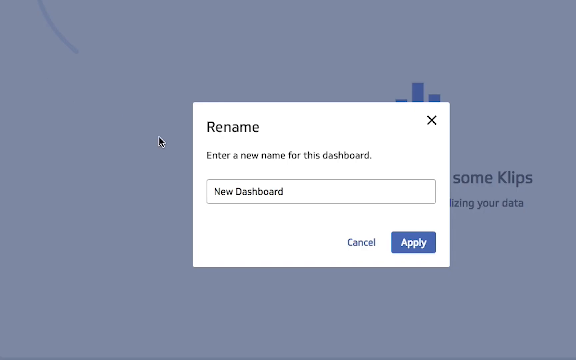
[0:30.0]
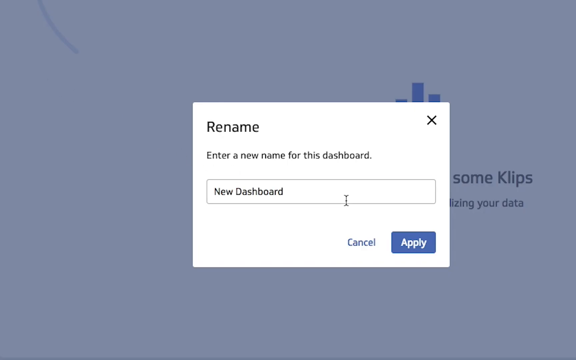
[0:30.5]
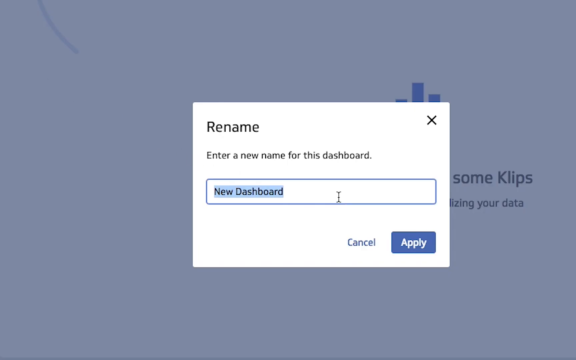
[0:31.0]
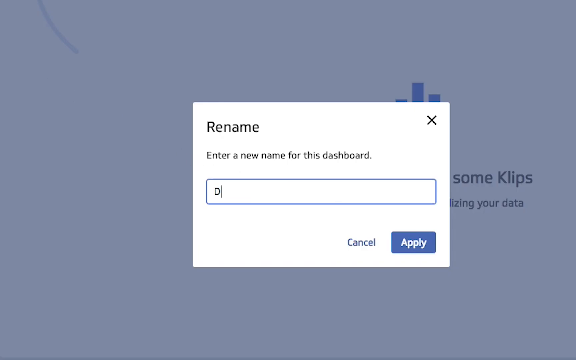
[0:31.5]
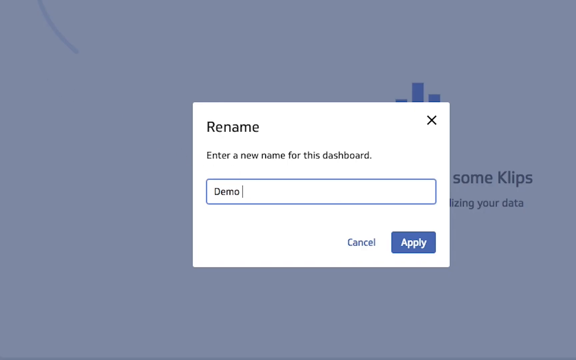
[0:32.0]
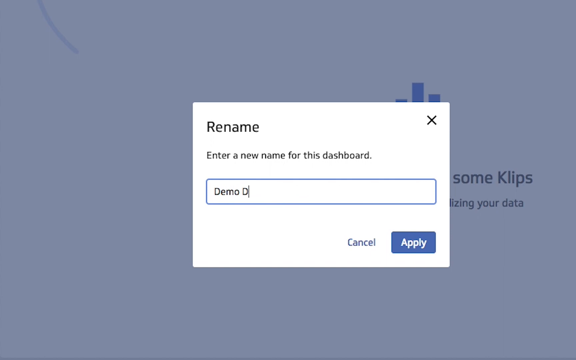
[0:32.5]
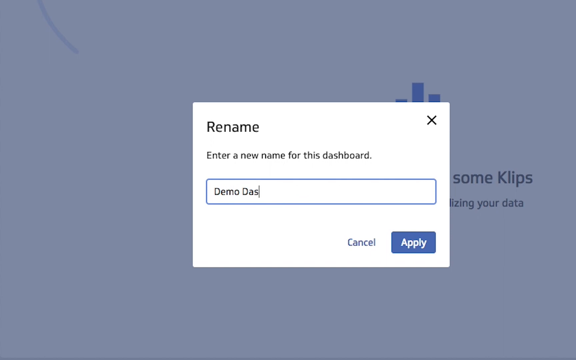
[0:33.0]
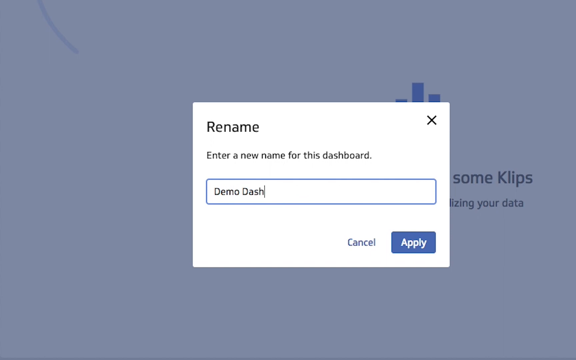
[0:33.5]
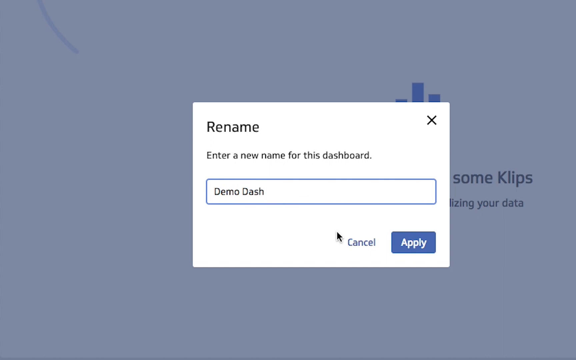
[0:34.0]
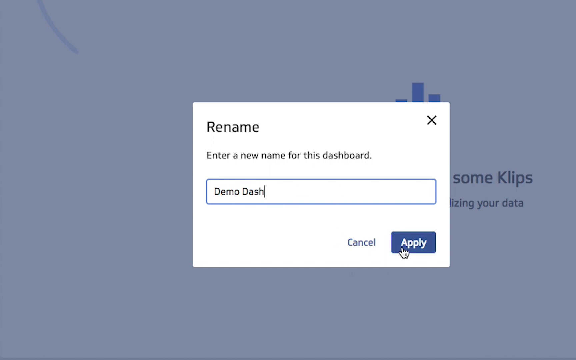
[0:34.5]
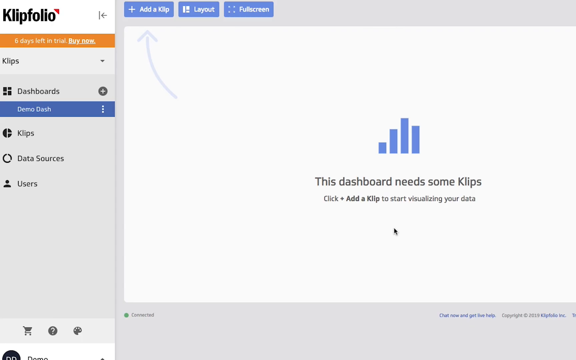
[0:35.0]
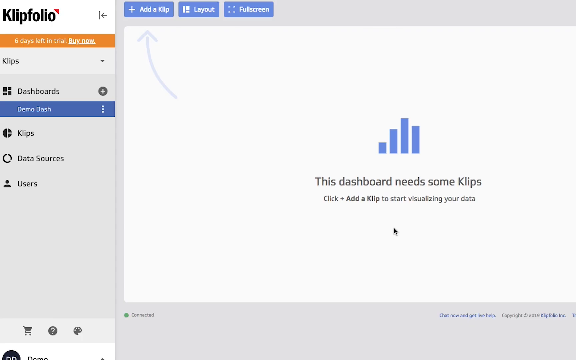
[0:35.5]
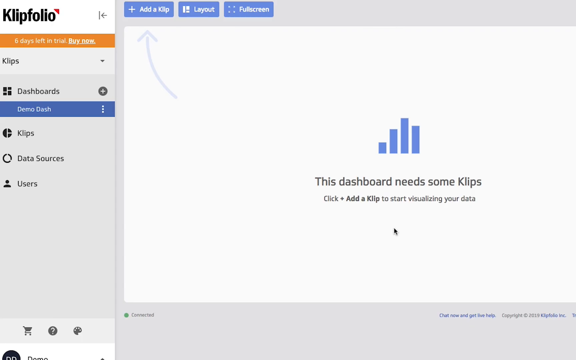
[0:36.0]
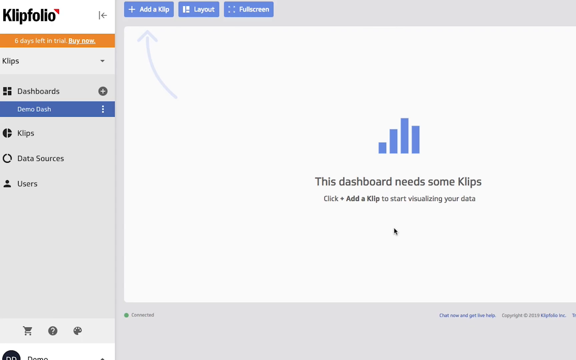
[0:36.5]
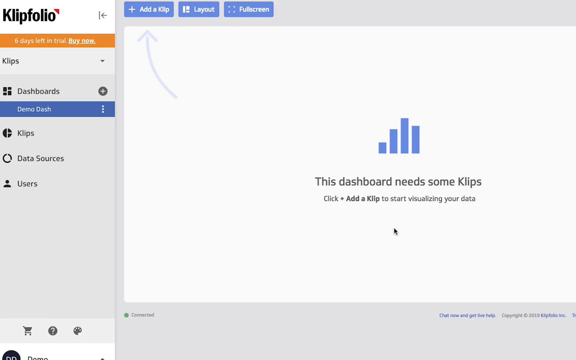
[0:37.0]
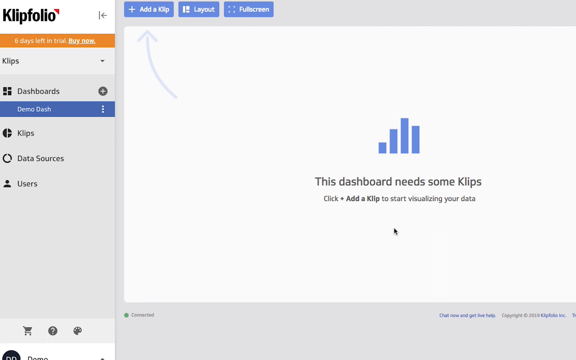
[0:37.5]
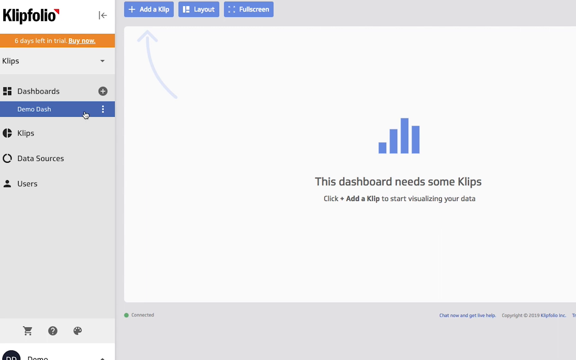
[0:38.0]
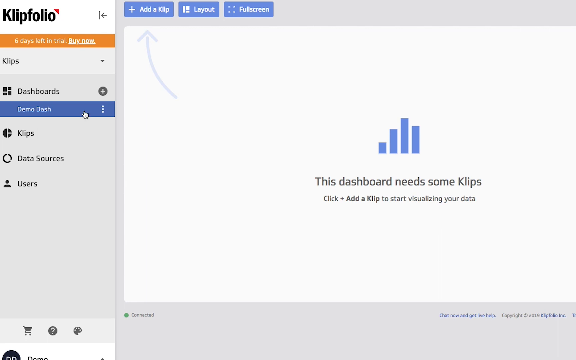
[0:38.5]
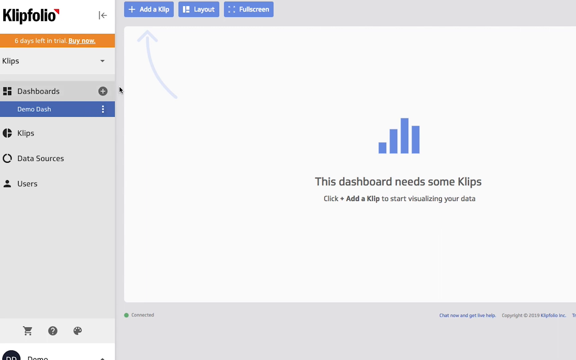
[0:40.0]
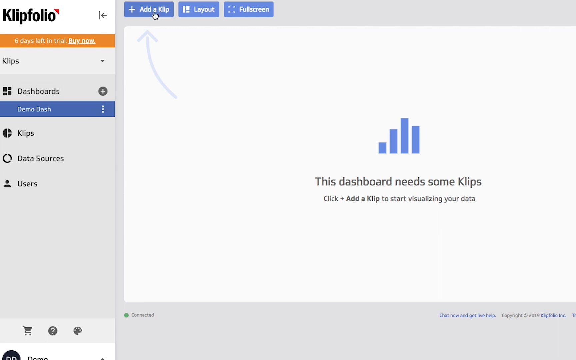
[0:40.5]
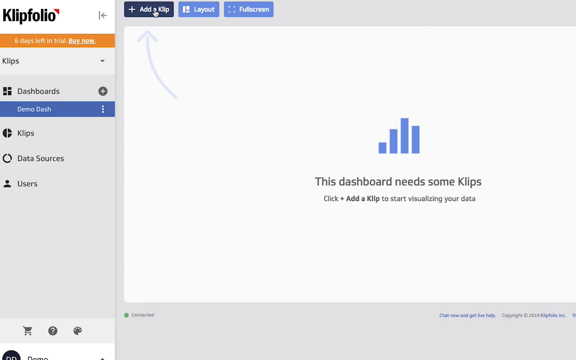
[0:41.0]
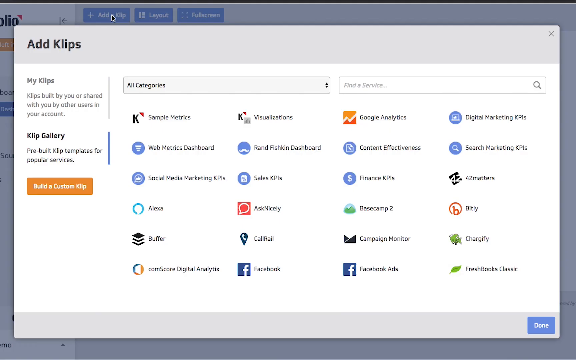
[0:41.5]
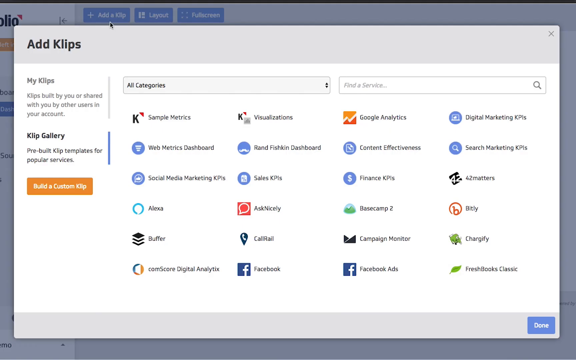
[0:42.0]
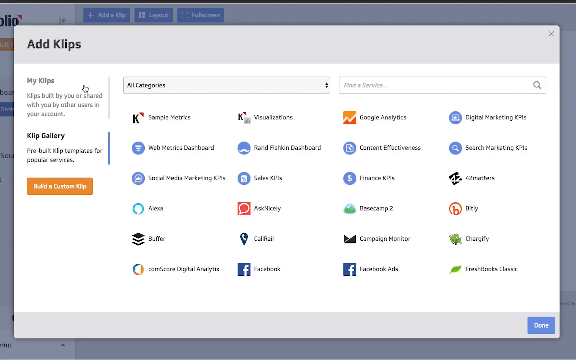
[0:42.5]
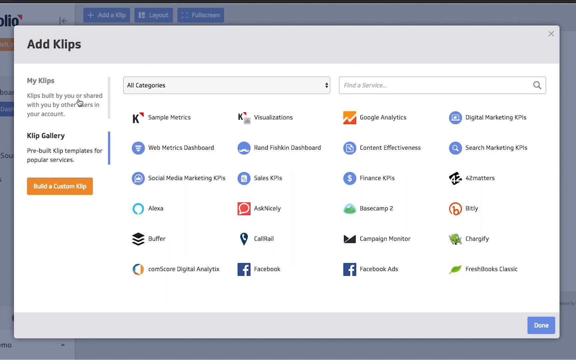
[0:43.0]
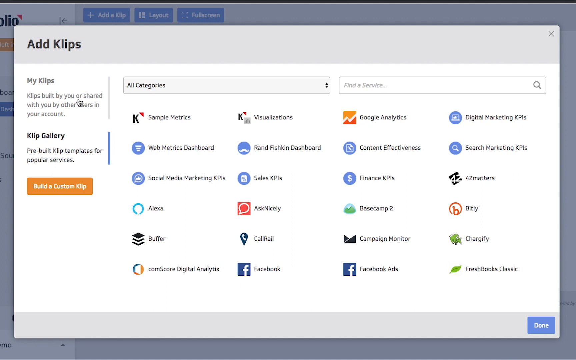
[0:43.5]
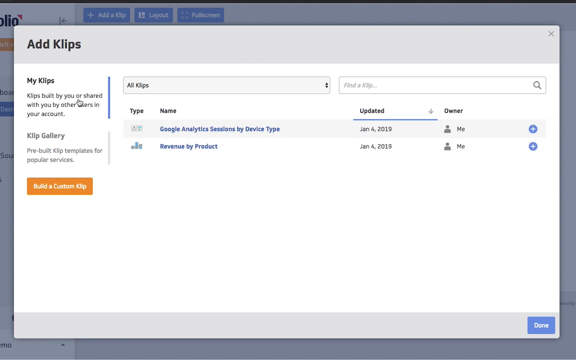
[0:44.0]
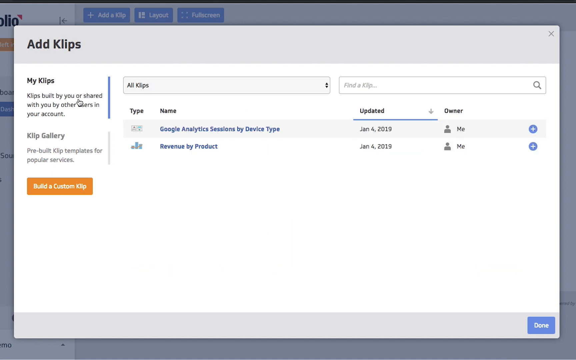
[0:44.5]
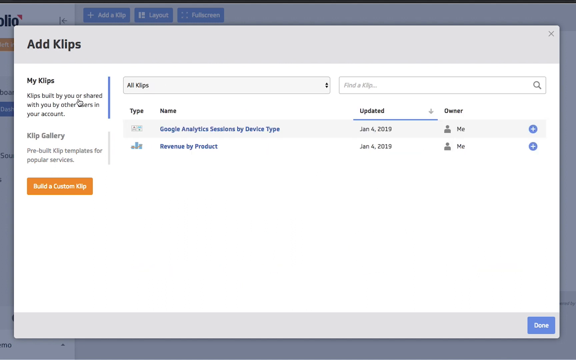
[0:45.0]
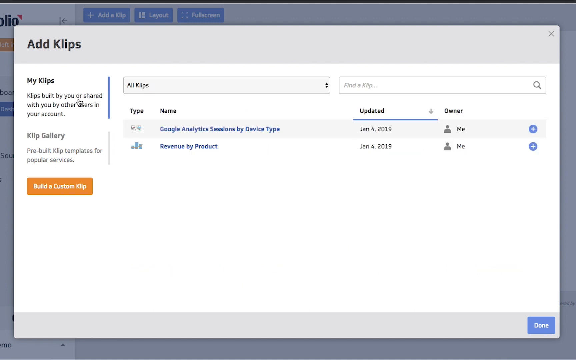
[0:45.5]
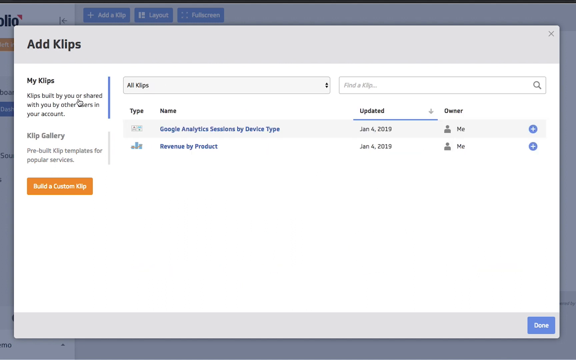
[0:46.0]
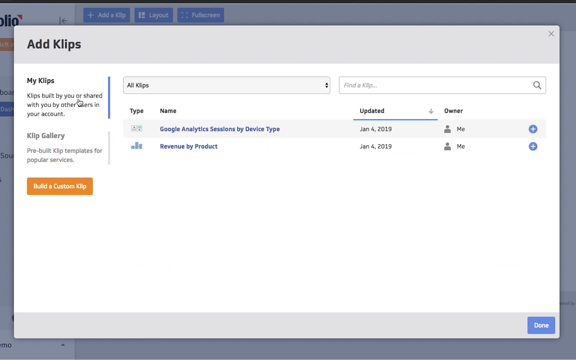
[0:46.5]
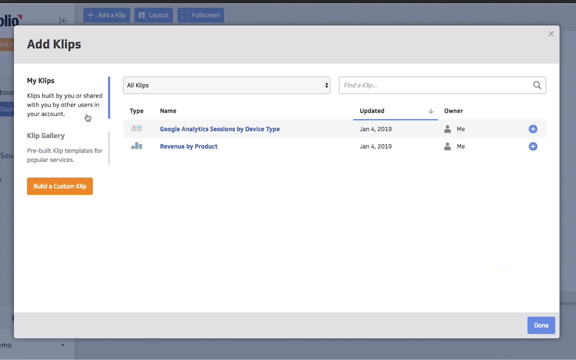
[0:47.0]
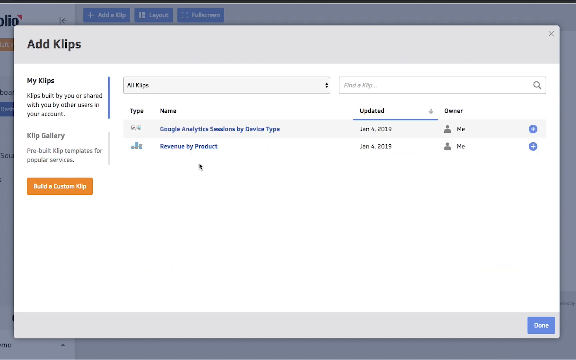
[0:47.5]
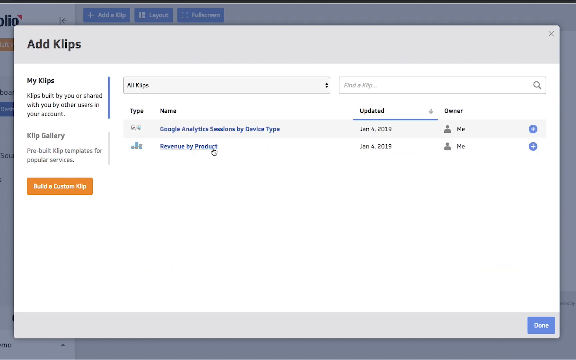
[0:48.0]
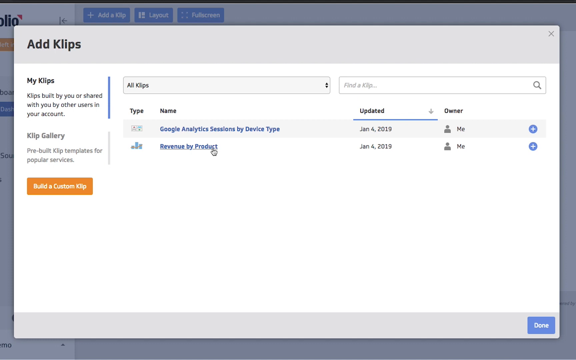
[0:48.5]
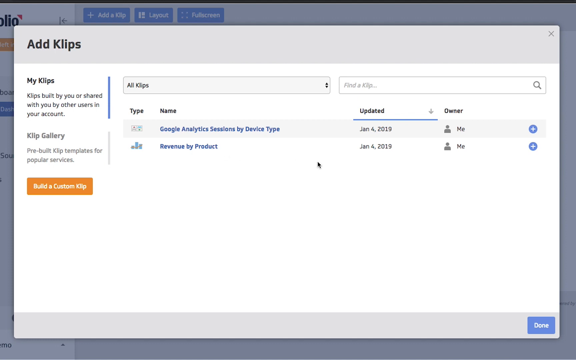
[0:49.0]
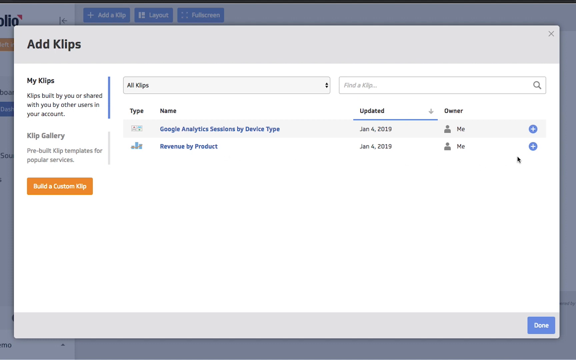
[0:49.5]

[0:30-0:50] The person renames the dashboard, calling it "demo dash," and clicks apply. The screen reads "this dashboard needs some clips." They click on add a file, which shows "my clips," and then click the little plus sign. The pace is not too fast, and the mouse cursor is visible; it turns white when it is over a word and is black when it is not.